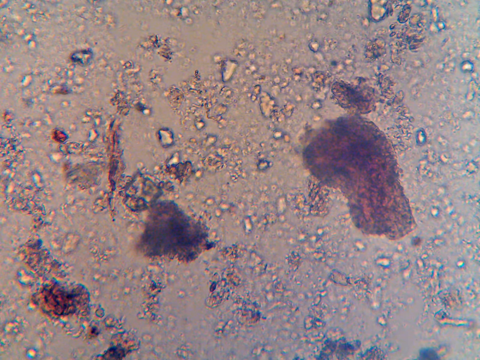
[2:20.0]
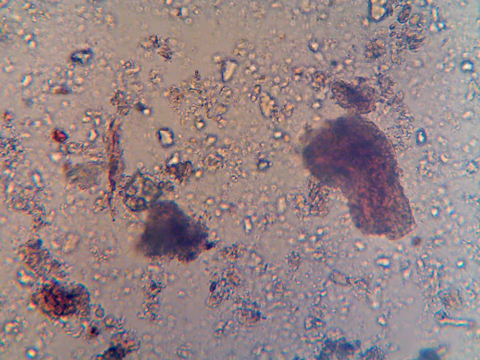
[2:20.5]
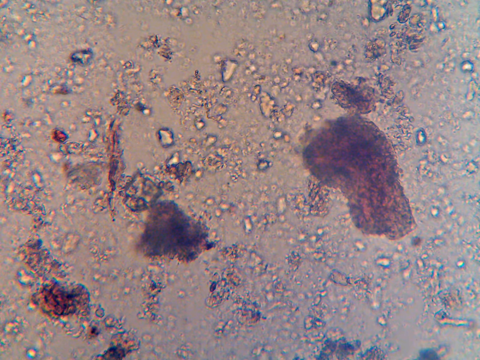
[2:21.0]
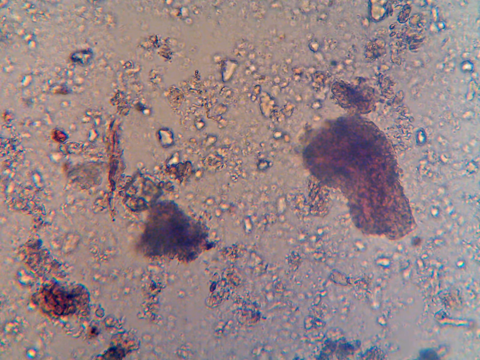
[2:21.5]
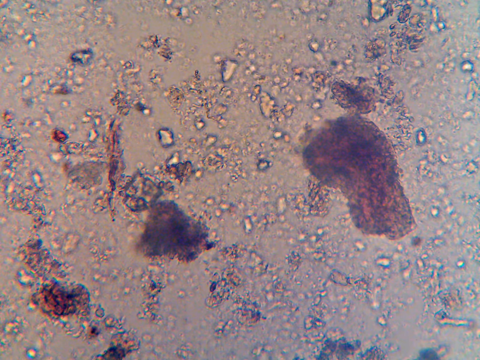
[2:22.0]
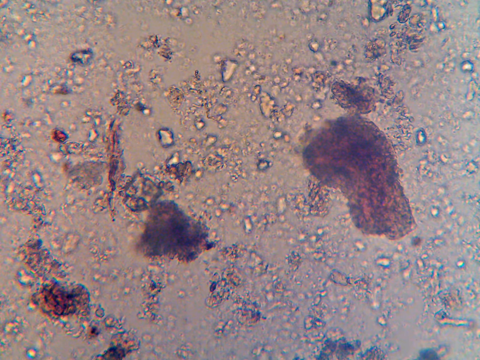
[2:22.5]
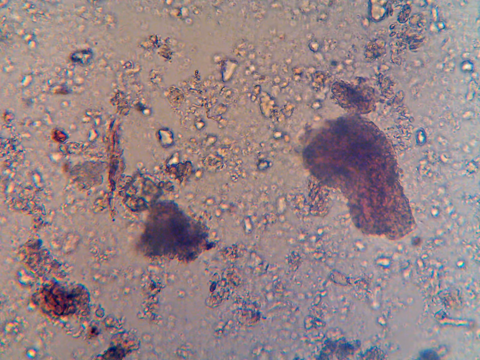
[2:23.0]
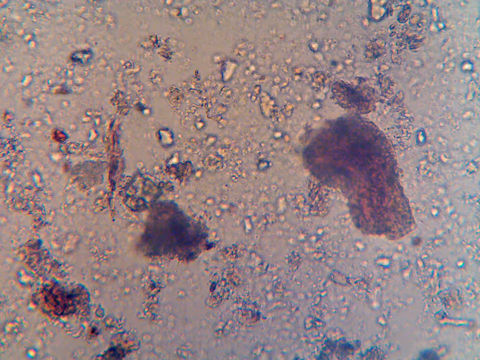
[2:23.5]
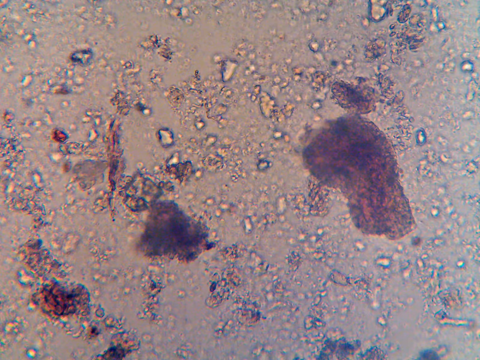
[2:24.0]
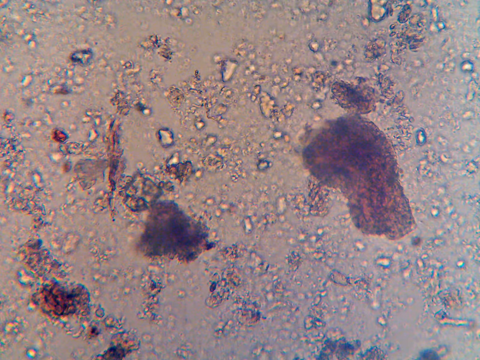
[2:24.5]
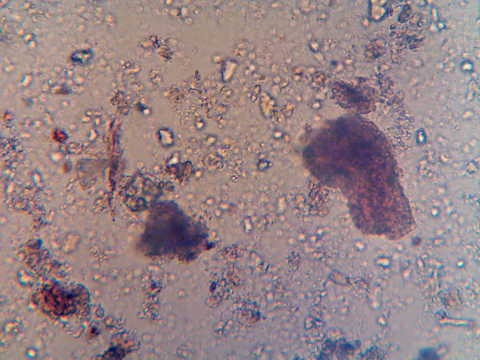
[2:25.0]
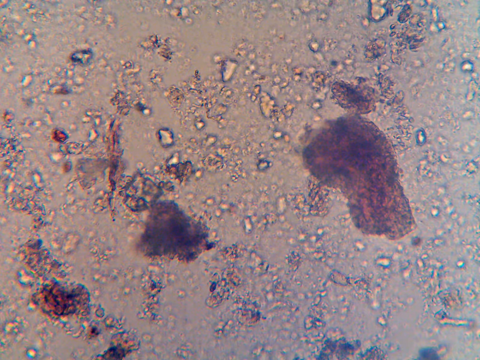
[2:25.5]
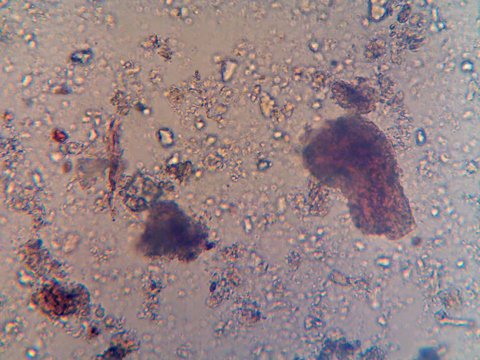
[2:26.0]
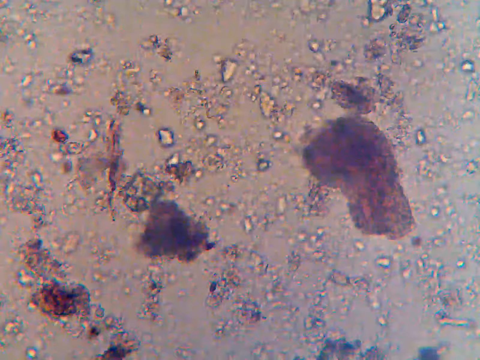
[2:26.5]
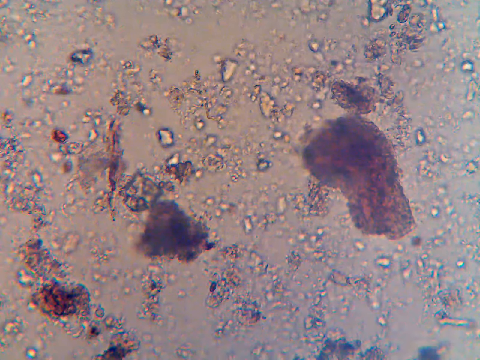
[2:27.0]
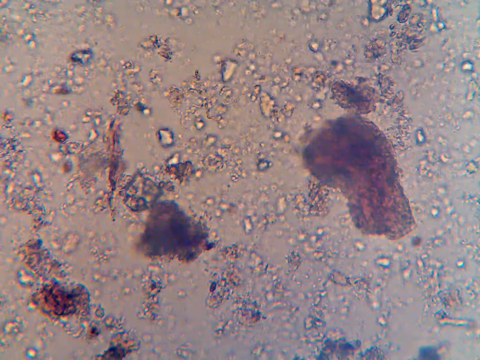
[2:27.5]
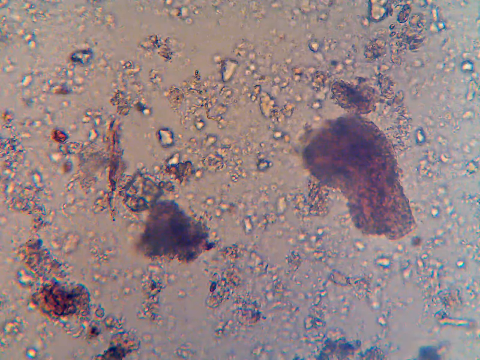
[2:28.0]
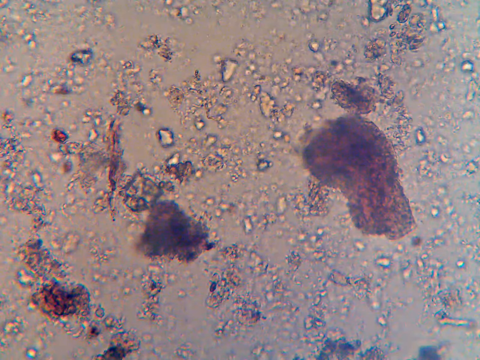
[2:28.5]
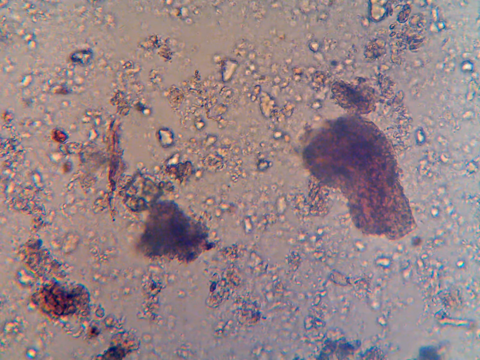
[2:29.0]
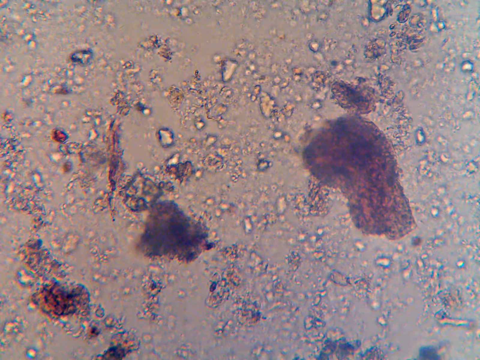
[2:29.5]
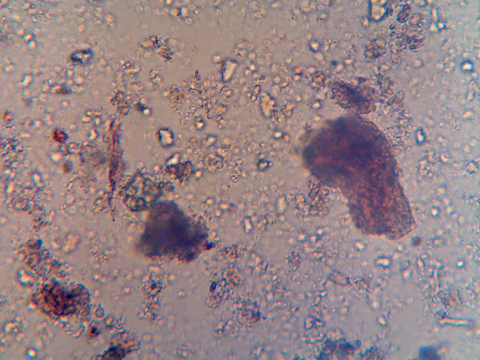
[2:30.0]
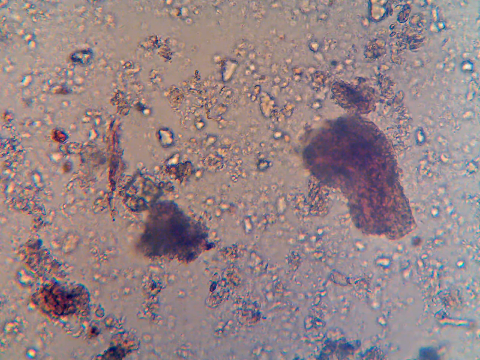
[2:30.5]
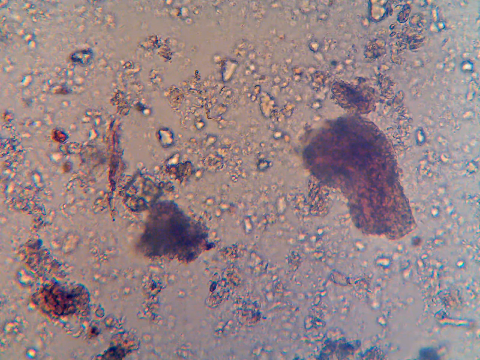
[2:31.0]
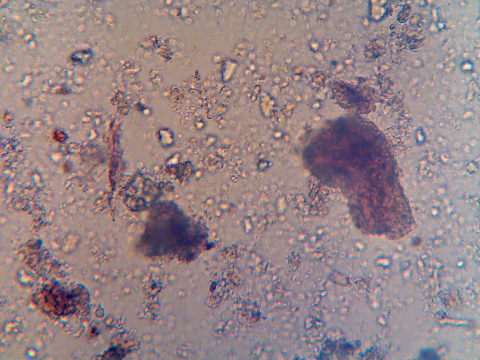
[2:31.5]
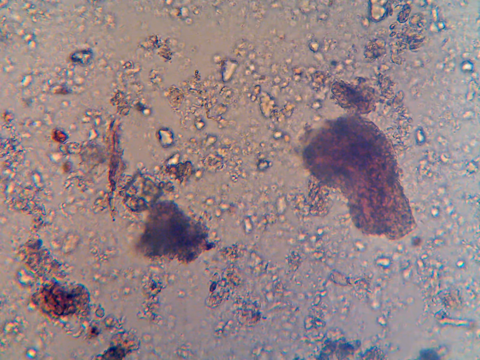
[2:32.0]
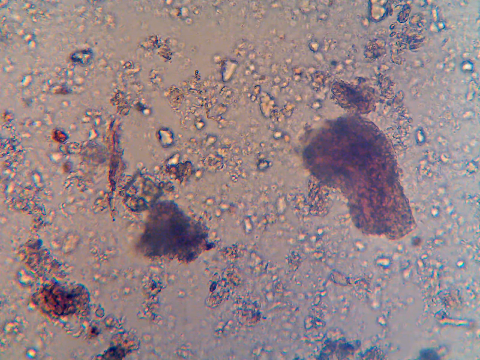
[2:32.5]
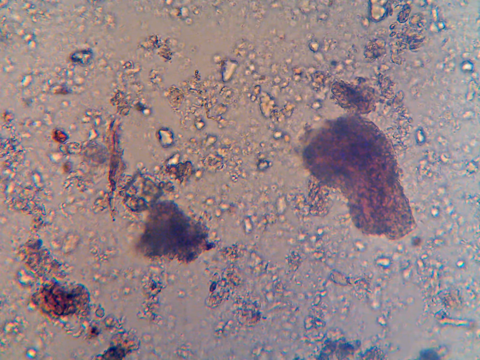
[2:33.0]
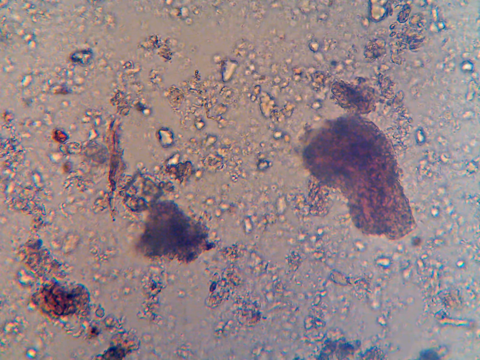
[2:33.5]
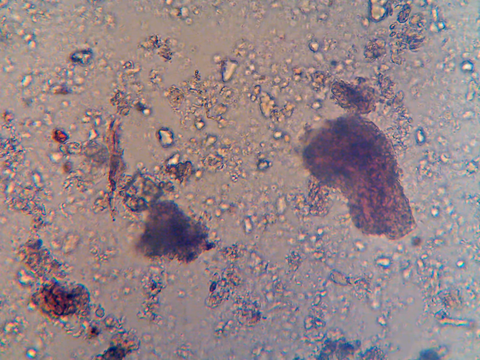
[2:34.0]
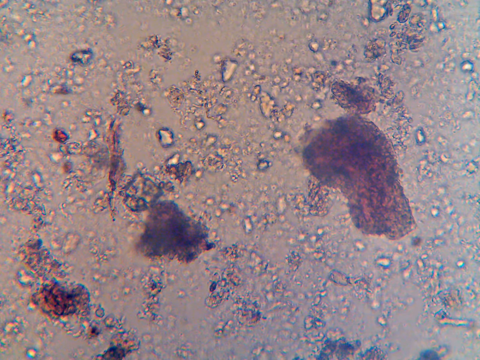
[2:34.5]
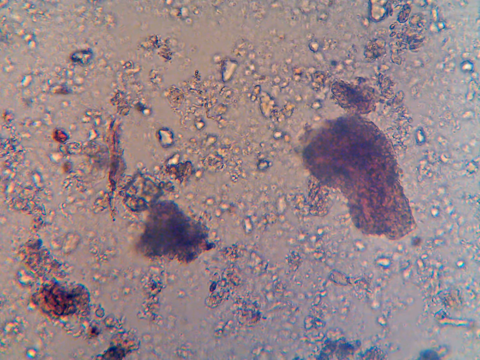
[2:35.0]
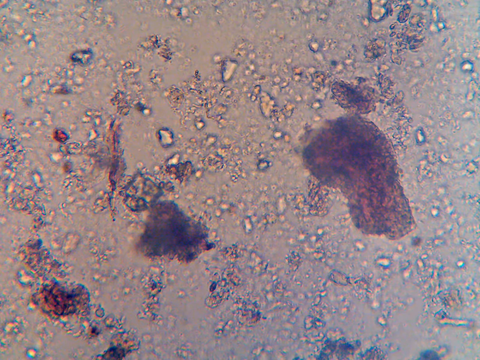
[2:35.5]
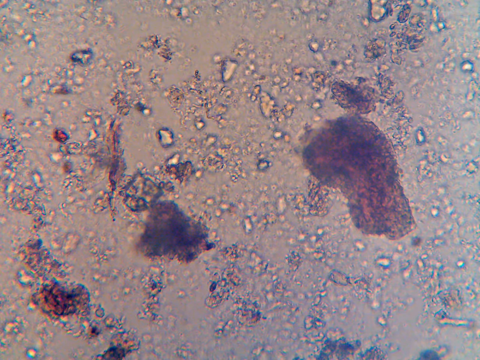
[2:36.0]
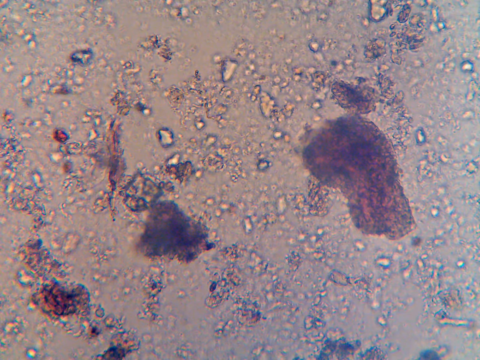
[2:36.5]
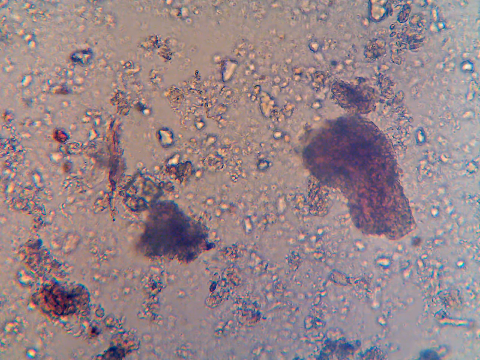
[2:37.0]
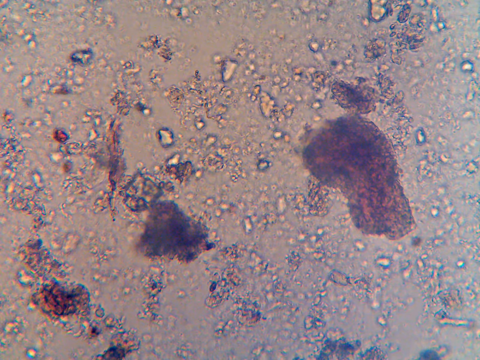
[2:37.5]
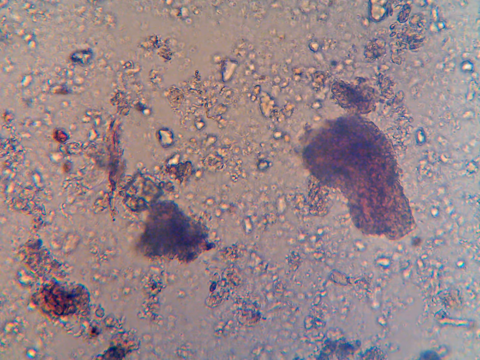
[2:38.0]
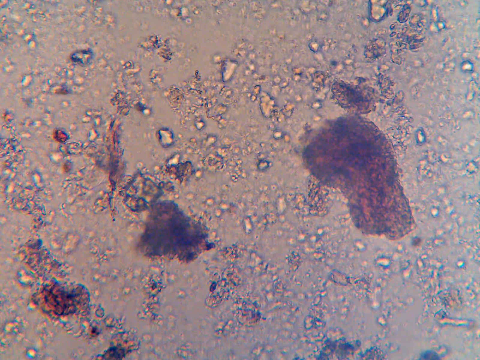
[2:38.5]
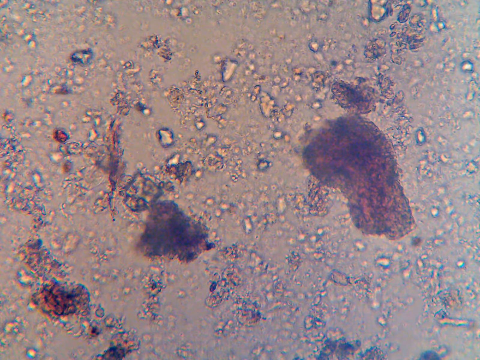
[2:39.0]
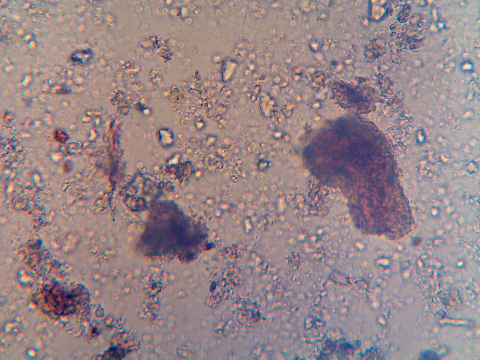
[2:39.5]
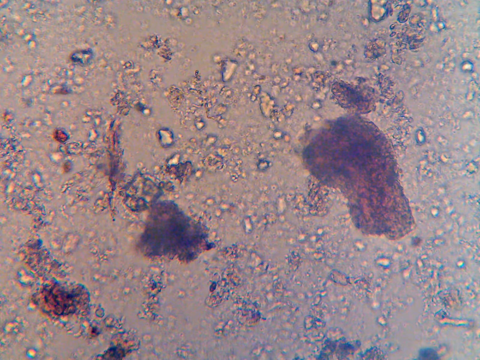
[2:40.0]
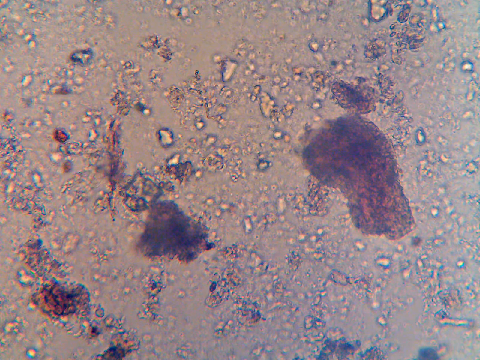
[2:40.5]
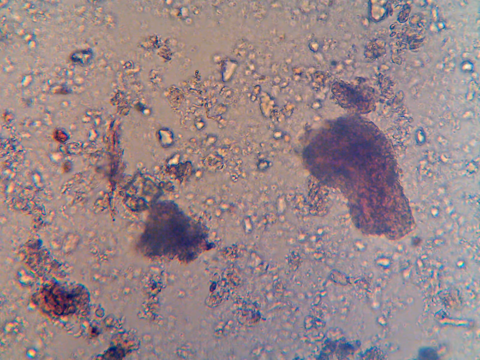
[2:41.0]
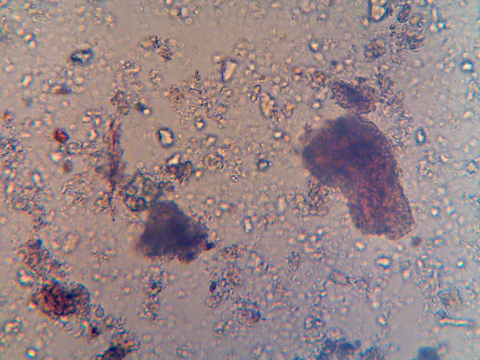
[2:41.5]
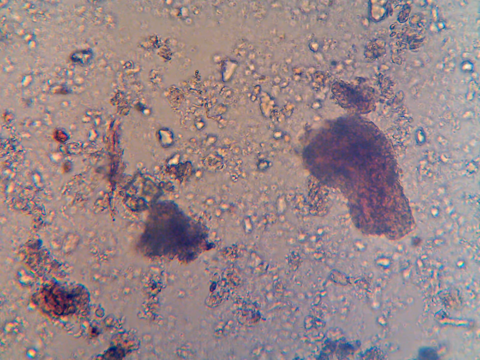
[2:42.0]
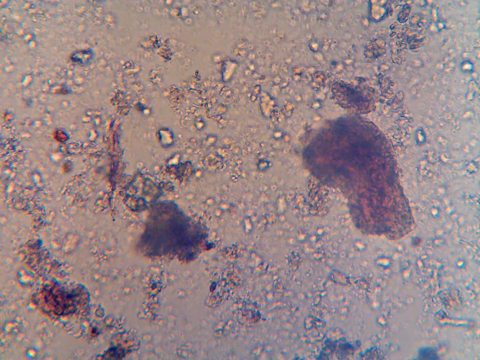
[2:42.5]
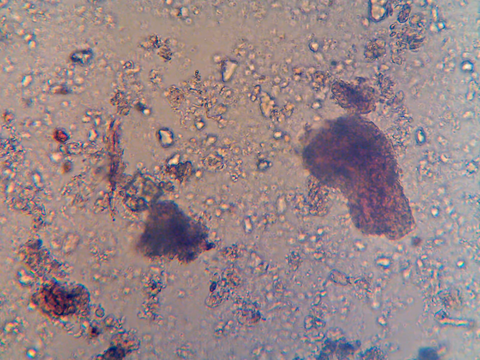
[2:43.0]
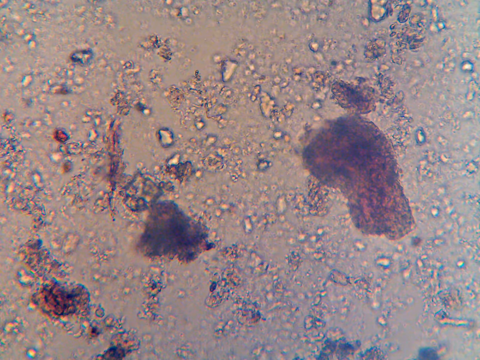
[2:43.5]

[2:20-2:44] The screen shows a brown-beige background containing what look like bubbles or round blobs, slightly lighter than the background, each with a dark area around it that makes it stand out. This layer of blobs is not everywhere but is fairly consistent across the screen. On top of it are three larger blobs: one at the bottom left, one in the center slightly left of middle, and one slightly right of middle in the center. These blobs are much bigger, darker, purplish black, and fixed. A blurry area seems to shift location, moving slightly upward and rotating, then shifting back downward.